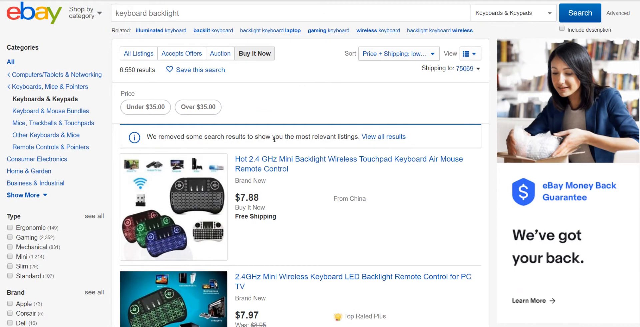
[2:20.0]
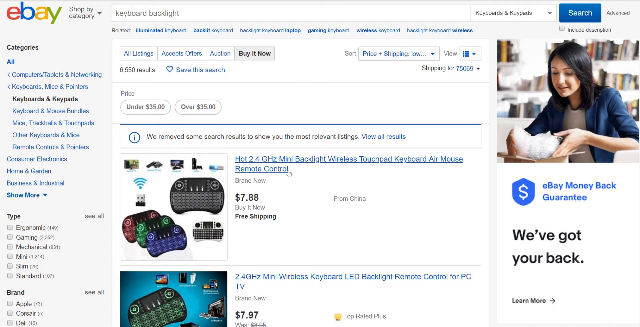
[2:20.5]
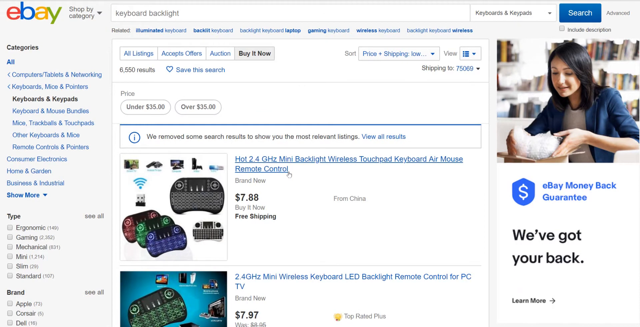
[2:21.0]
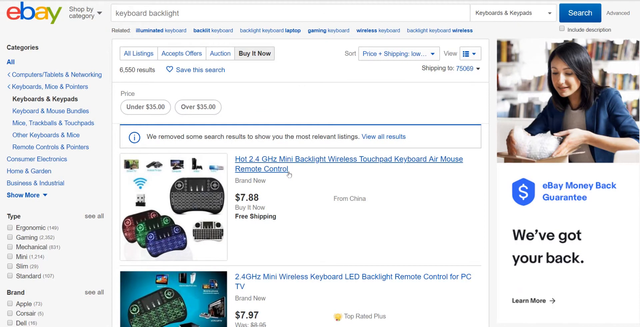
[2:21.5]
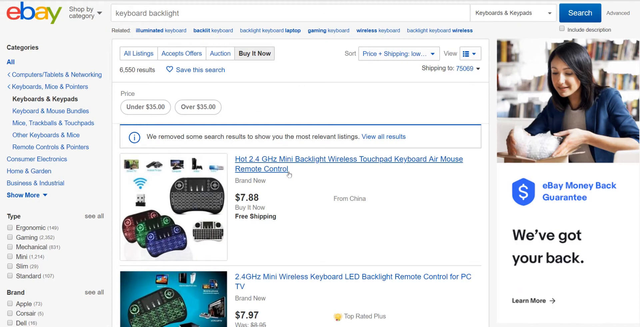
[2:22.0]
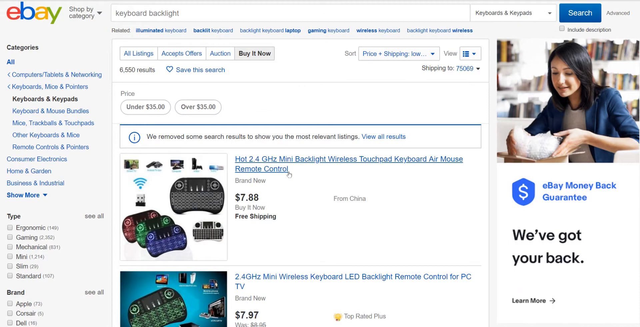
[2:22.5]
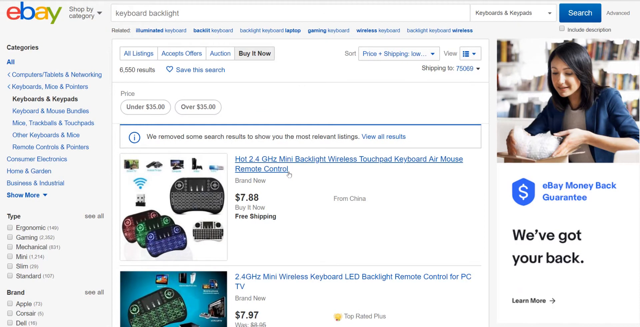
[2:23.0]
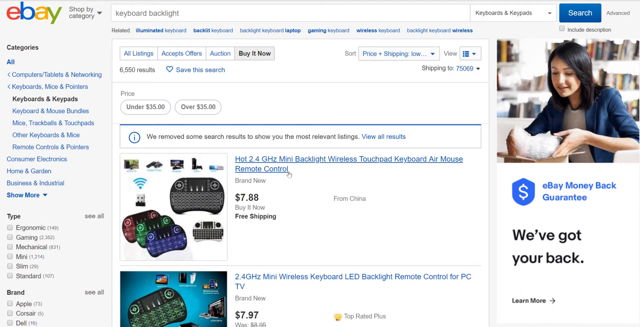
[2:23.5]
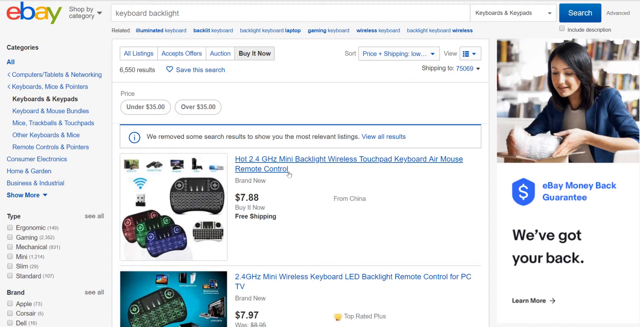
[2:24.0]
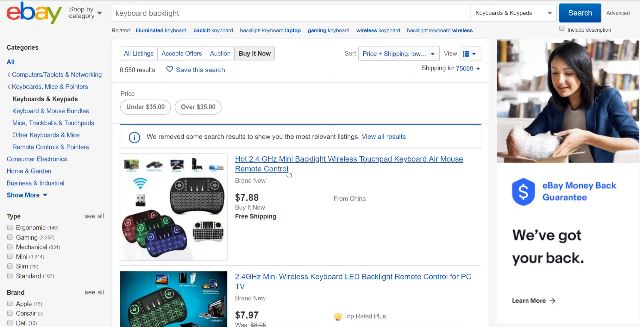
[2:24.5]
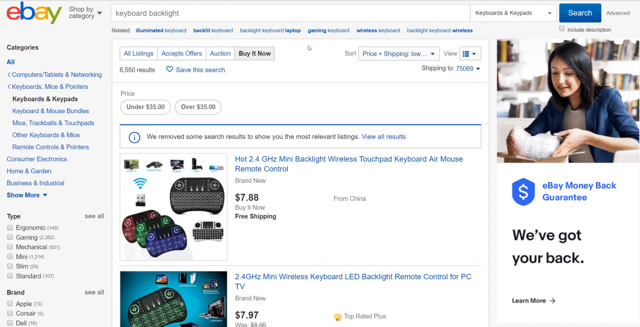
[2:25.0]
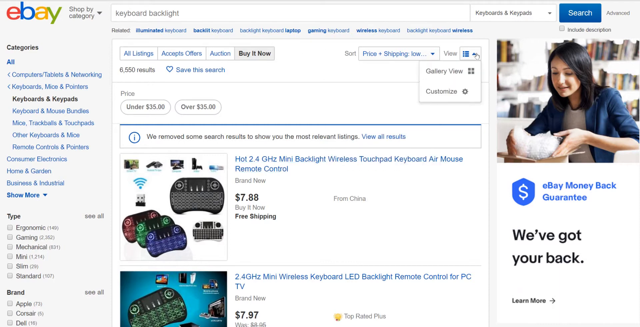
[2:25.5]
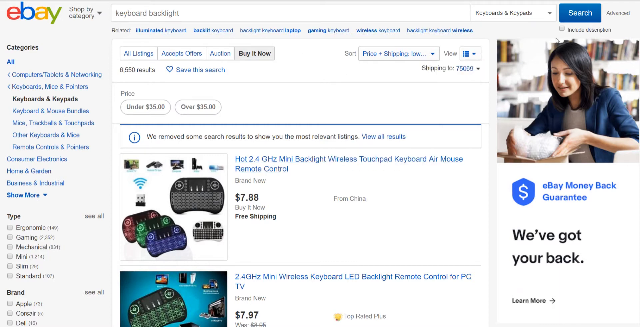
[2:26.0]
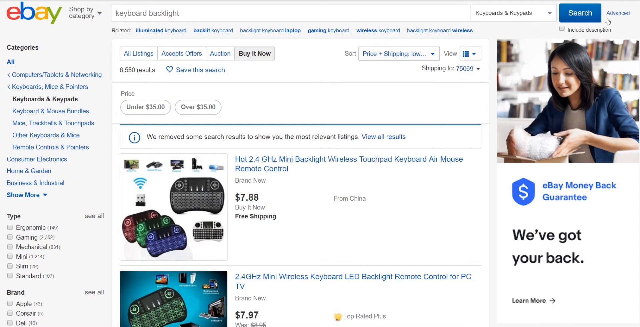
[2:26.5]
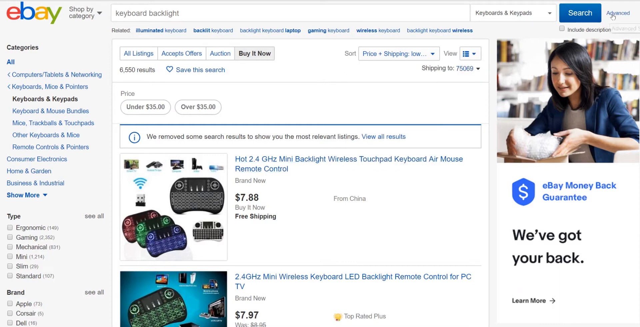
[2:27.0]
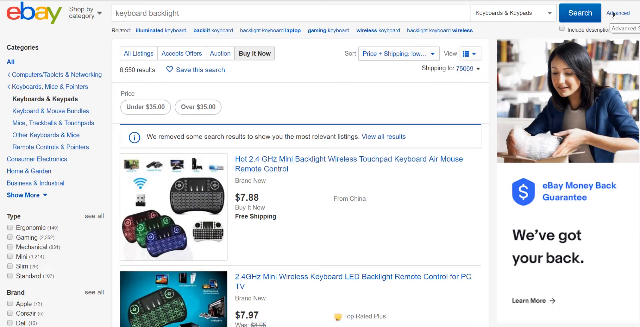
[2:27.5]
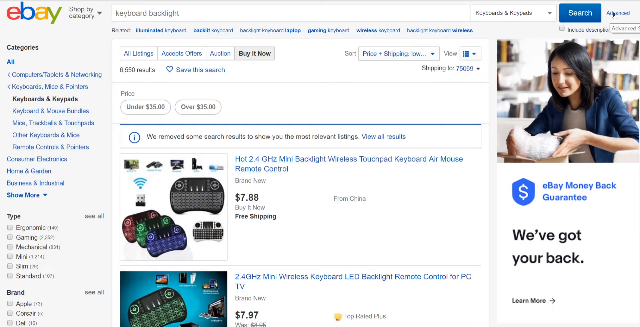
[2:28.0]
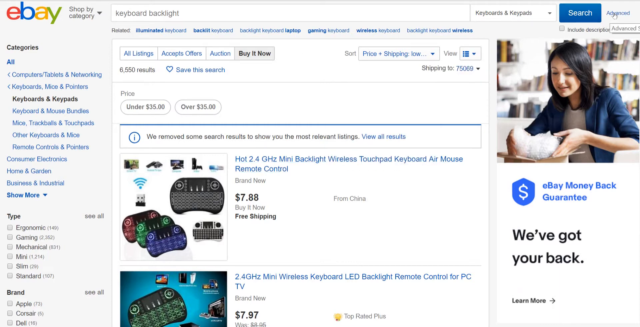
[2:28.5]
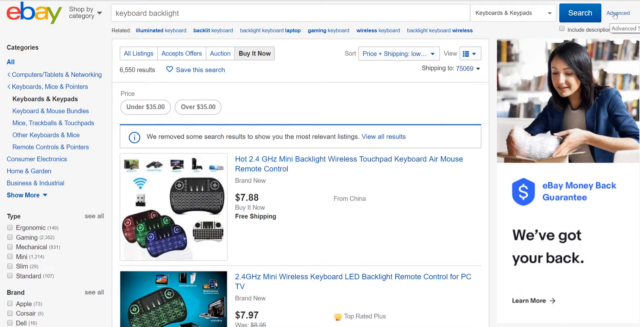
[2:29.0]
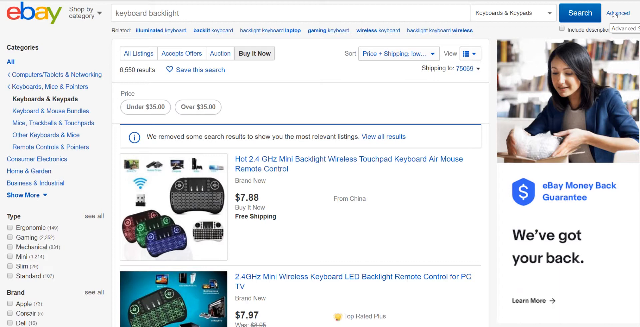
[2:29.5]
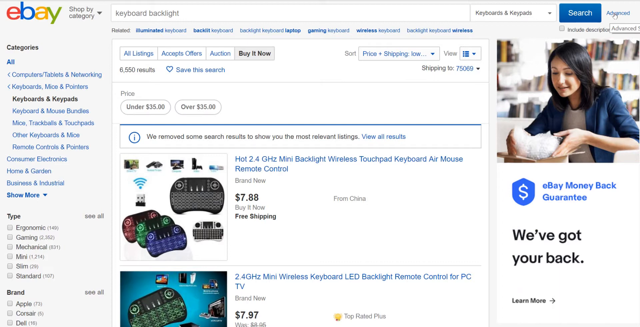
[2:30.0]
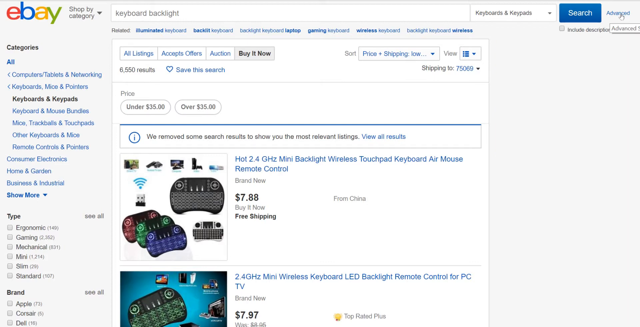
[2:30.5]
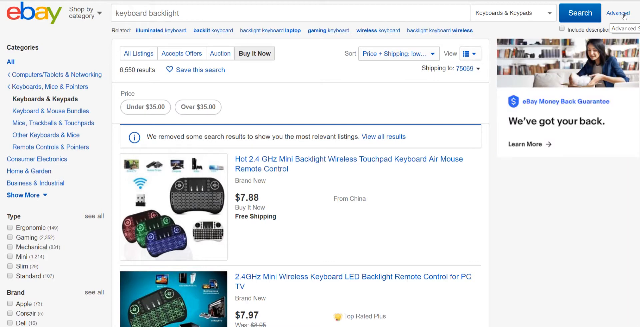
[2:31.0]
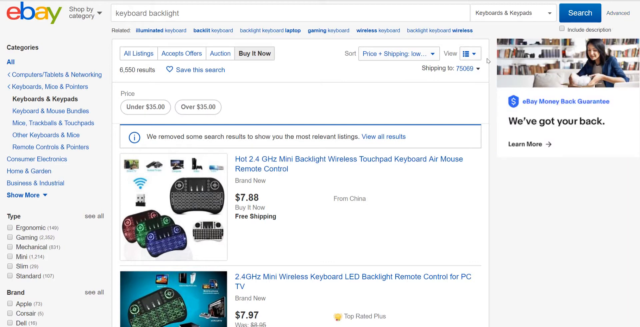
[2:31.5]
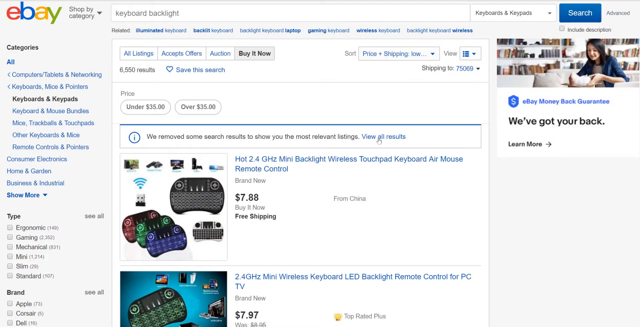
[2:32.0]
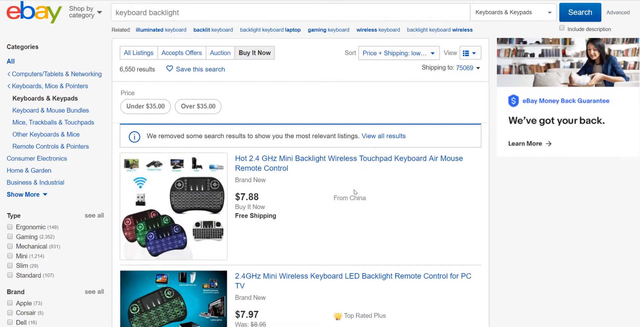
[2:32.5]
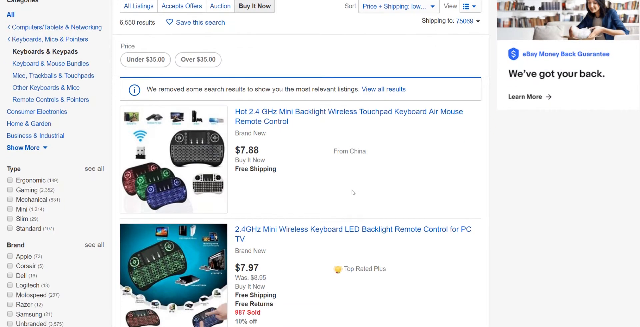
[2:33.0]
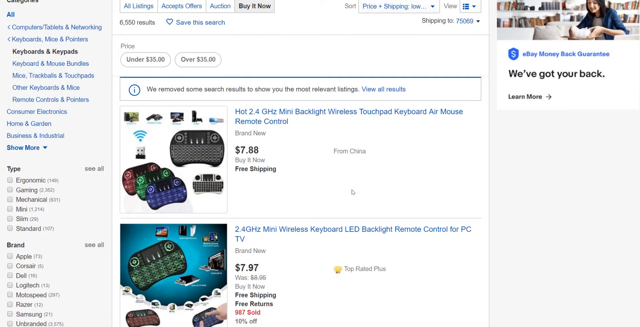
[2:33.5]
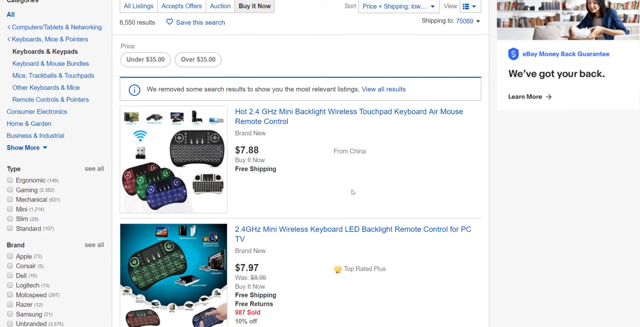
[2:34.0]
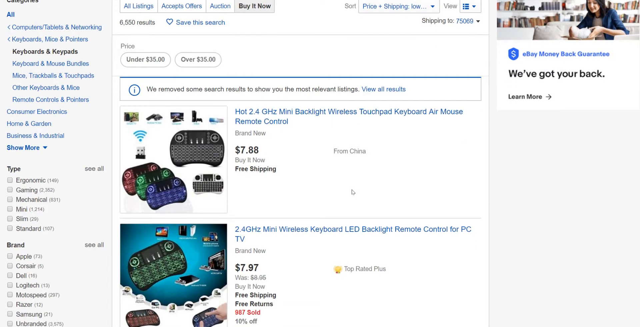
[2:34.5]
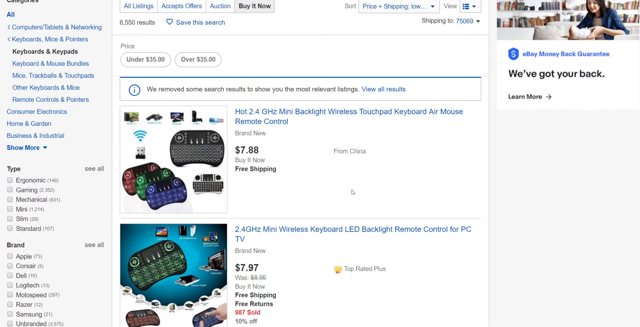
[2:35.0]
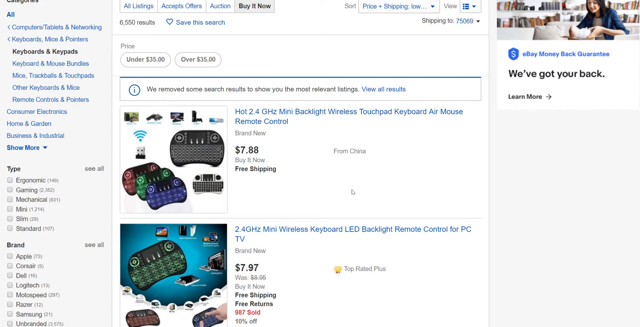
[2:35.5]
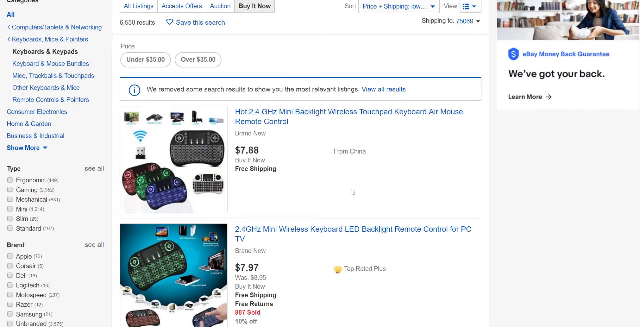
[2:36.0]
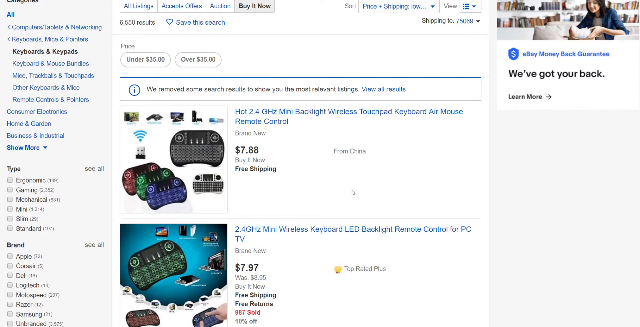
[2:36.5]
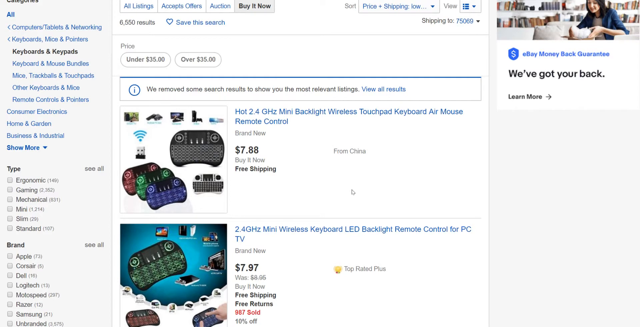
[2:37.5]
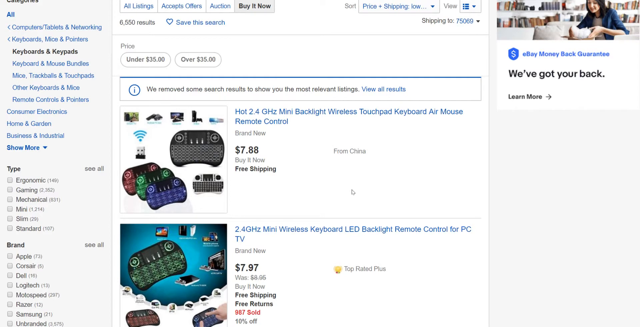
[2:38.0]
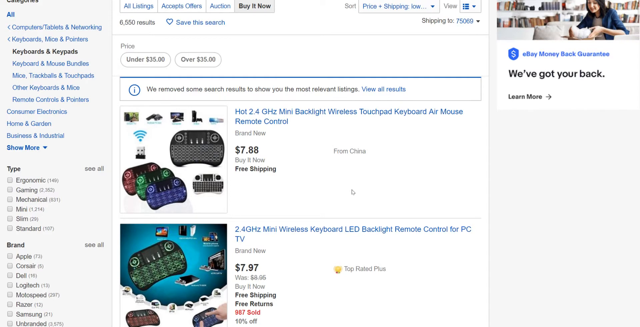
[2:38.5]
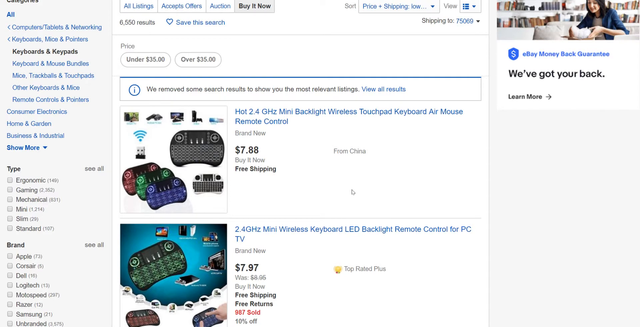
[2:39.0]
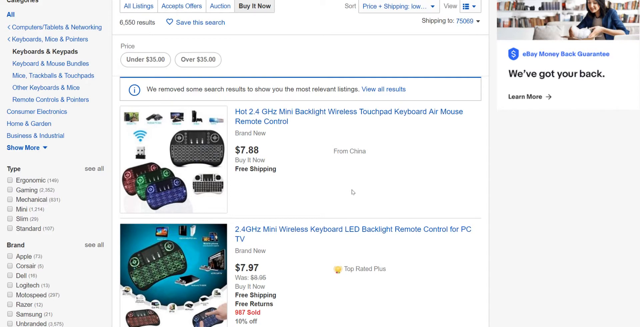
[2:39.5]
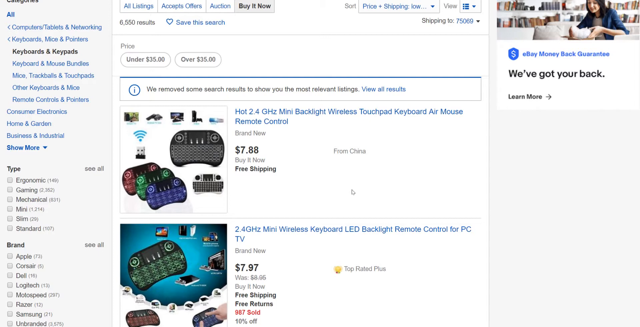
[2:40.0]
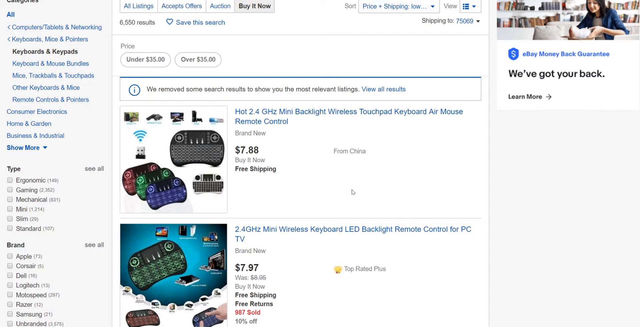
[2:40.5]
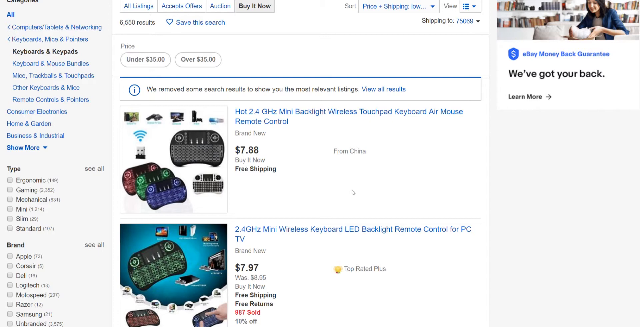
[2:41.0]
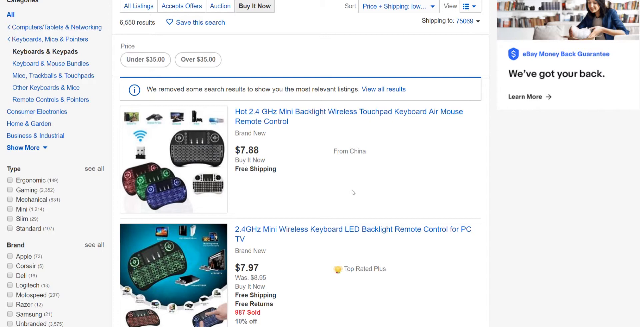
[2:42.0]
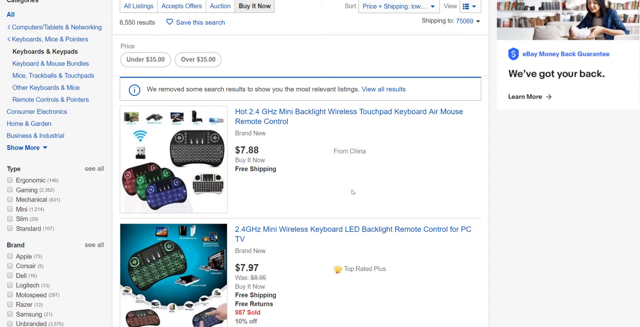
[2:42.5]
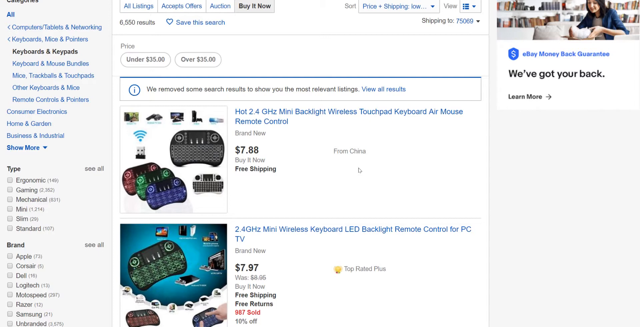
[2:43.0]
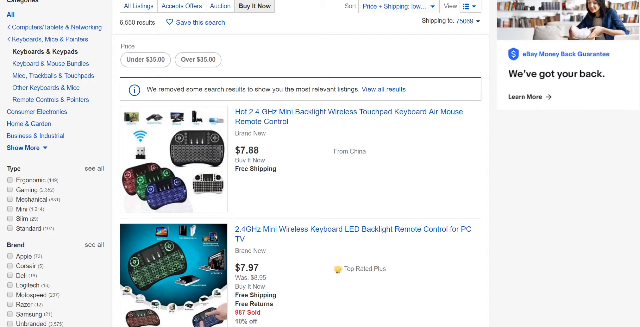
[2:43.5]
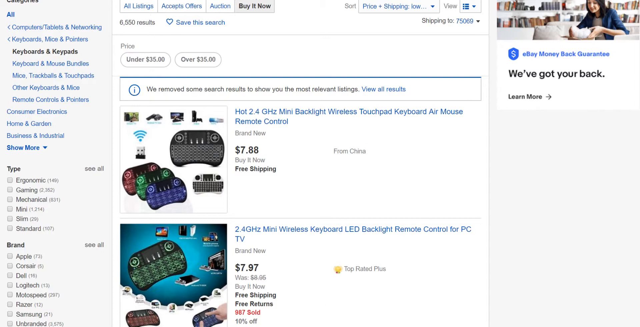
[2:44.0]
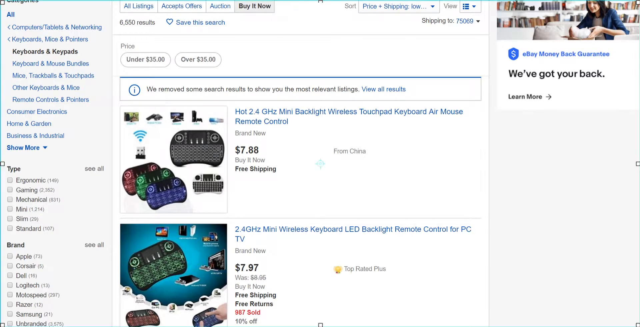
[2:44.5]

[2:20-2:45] The person goes back up to the advanced button, which does not appear to make any changes to the website. They scroll down again to the first listing, where the action ends. The price constraints shown are "under $35" and "over $35," and the items shown are mostly much cheaper than $35. The page shows 8,550 results.